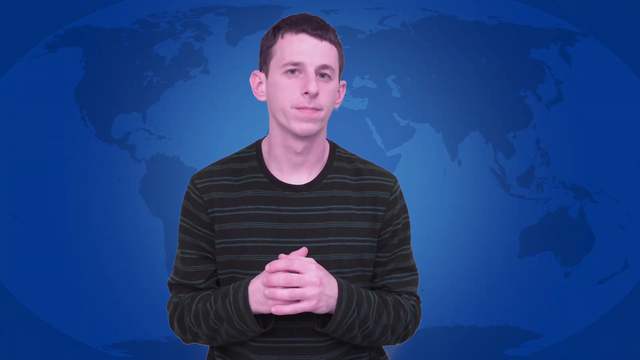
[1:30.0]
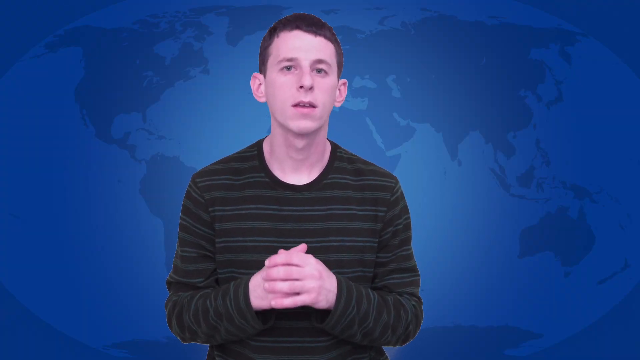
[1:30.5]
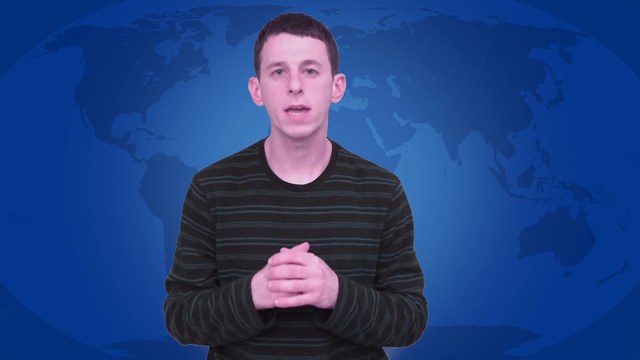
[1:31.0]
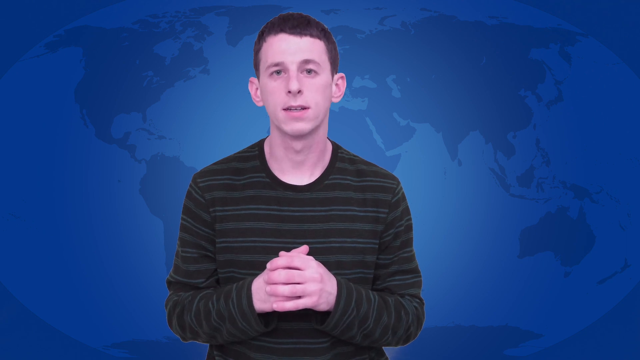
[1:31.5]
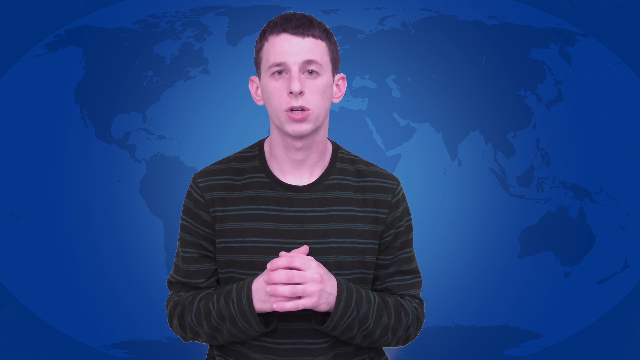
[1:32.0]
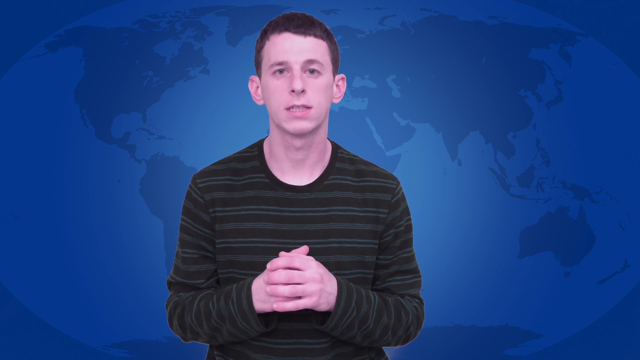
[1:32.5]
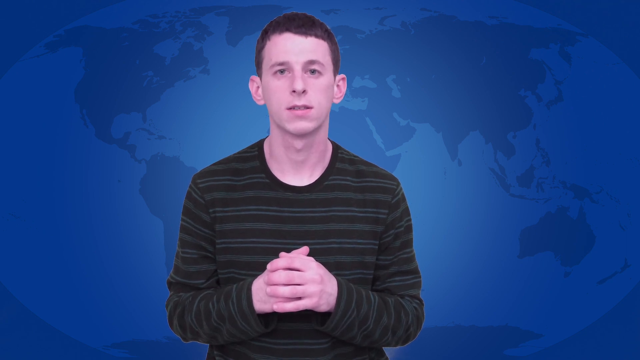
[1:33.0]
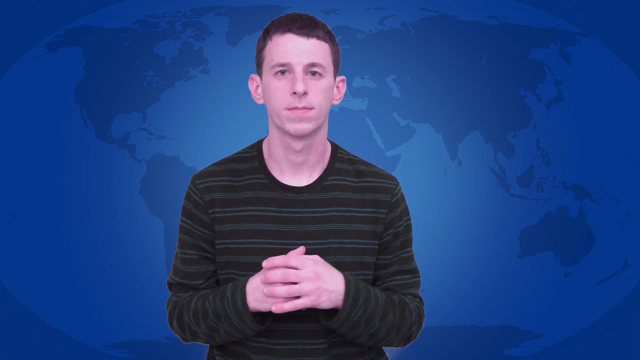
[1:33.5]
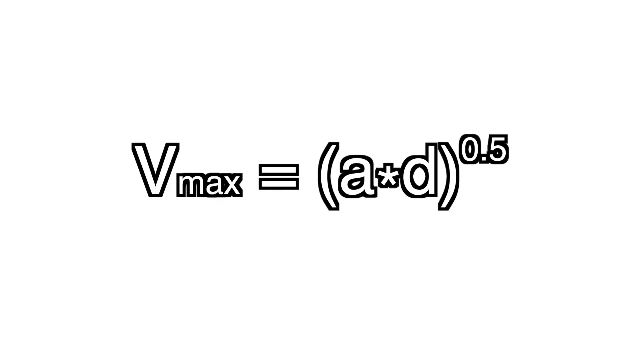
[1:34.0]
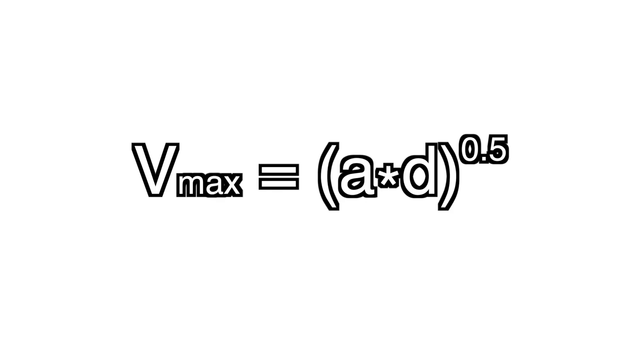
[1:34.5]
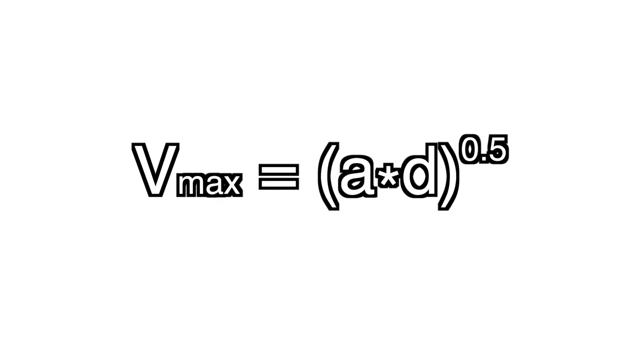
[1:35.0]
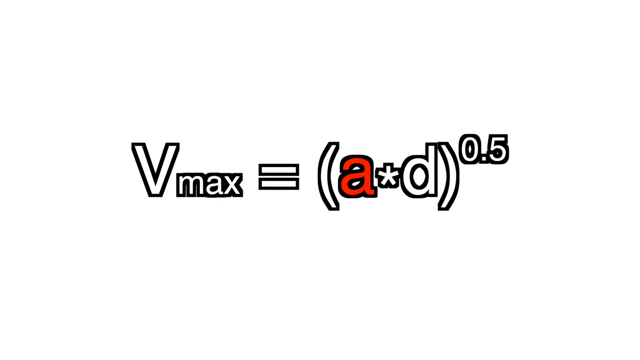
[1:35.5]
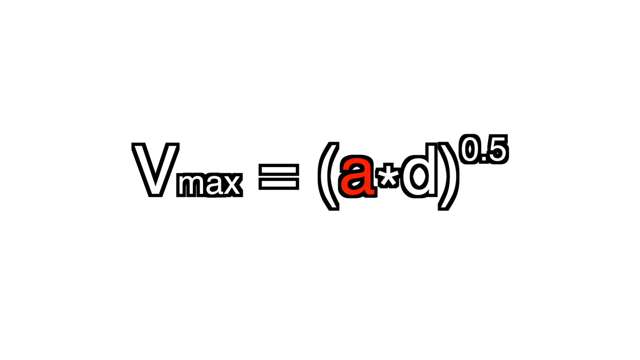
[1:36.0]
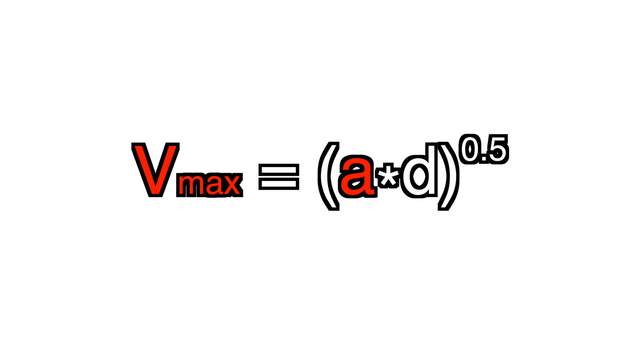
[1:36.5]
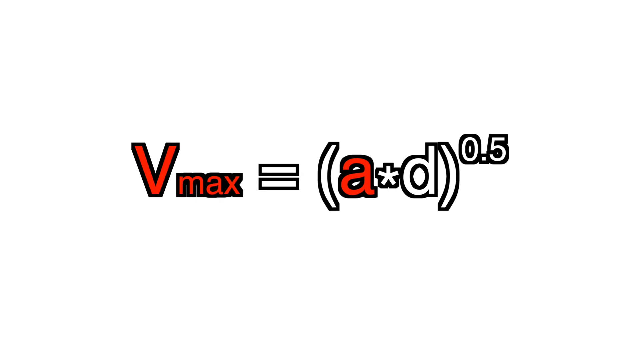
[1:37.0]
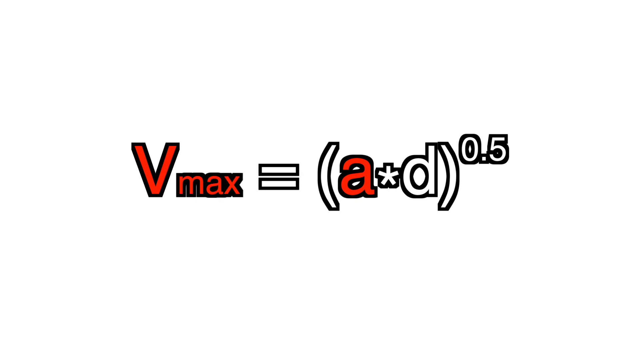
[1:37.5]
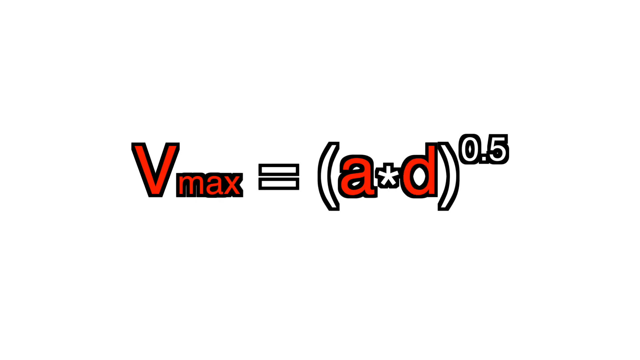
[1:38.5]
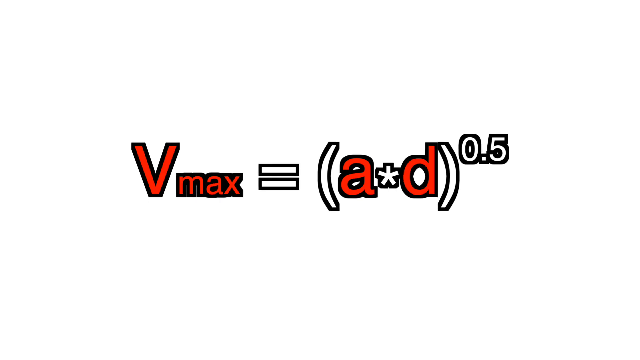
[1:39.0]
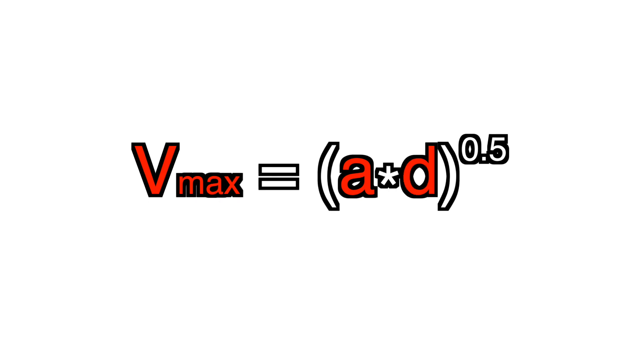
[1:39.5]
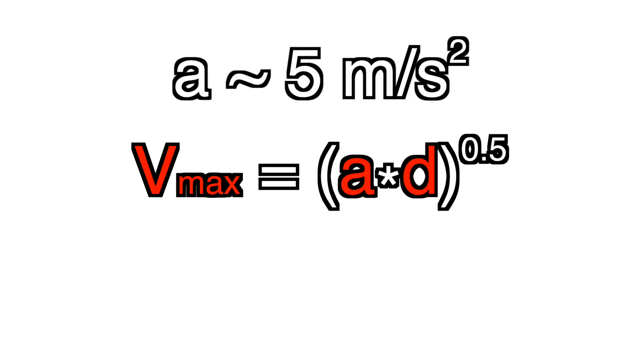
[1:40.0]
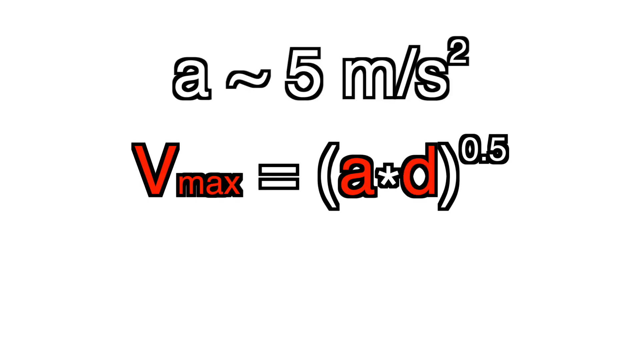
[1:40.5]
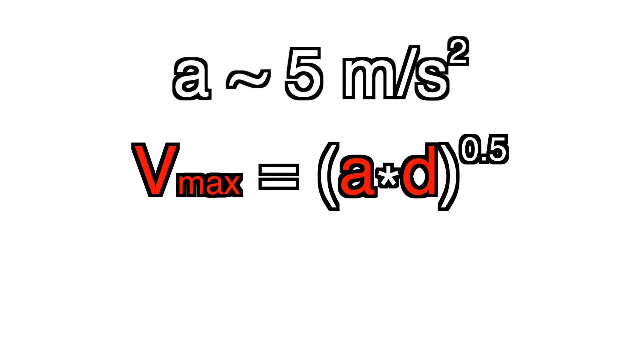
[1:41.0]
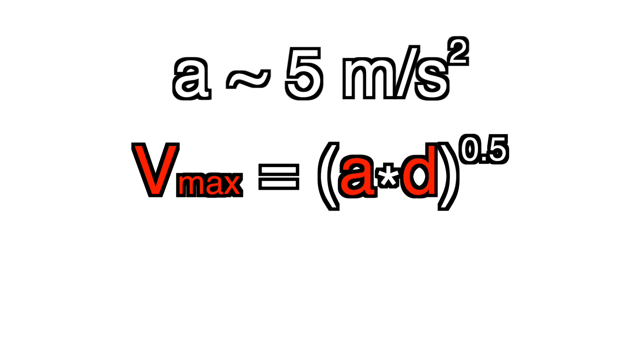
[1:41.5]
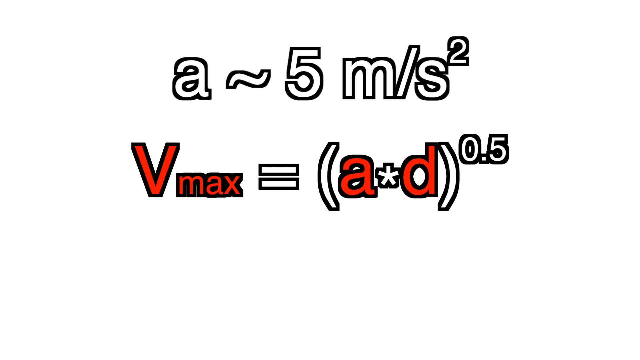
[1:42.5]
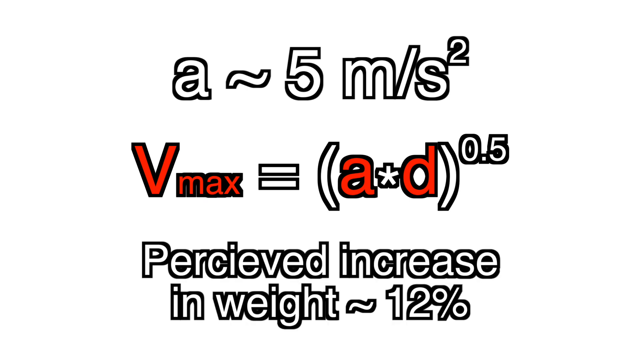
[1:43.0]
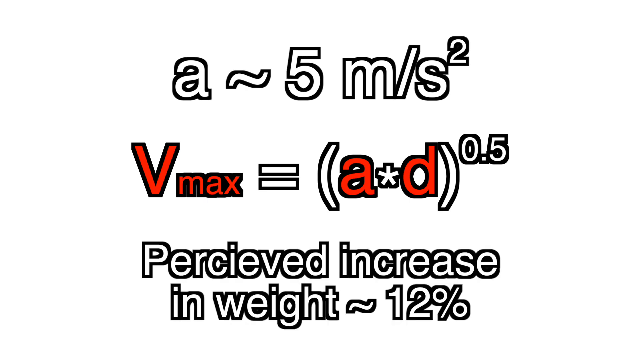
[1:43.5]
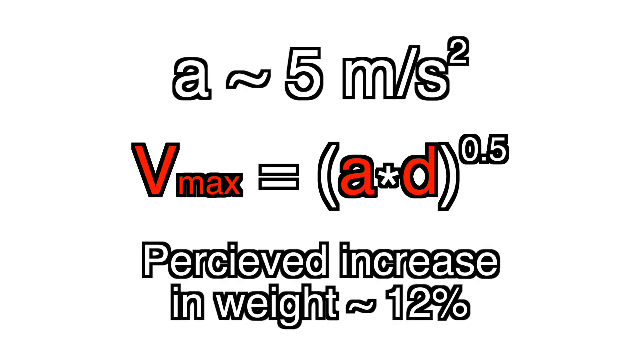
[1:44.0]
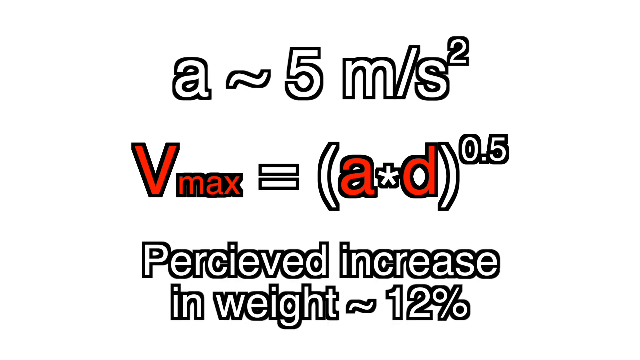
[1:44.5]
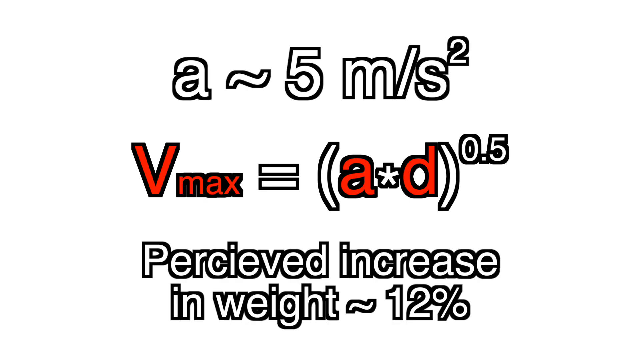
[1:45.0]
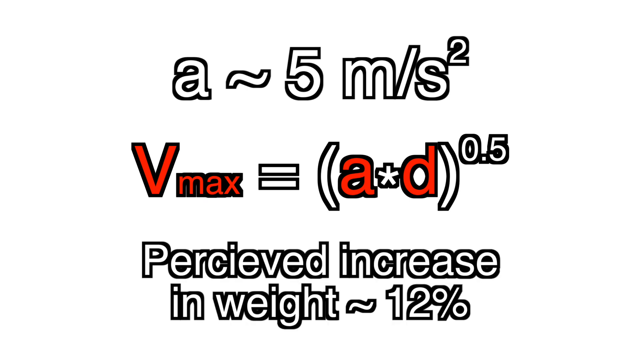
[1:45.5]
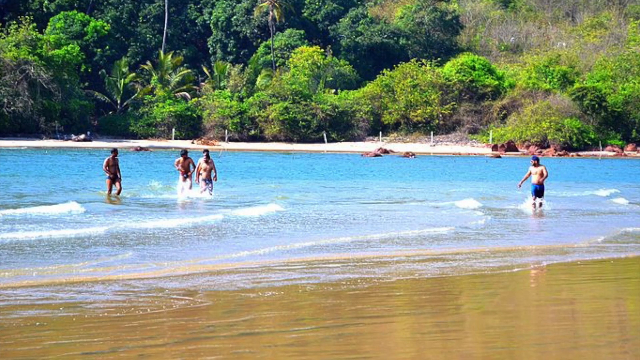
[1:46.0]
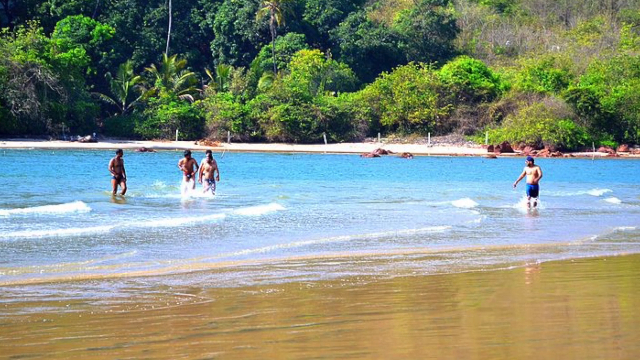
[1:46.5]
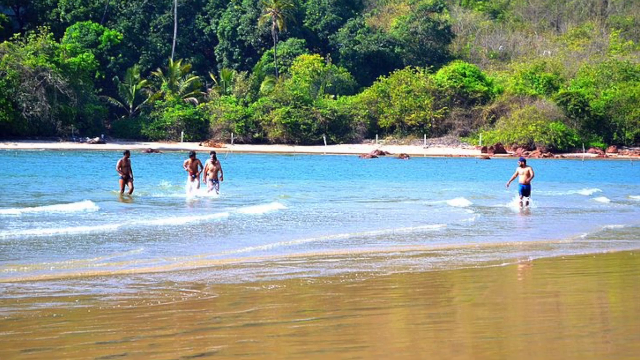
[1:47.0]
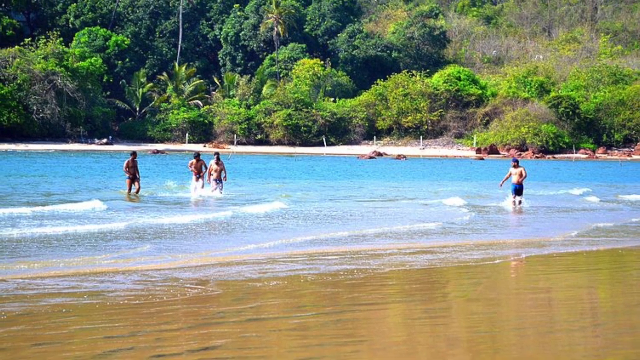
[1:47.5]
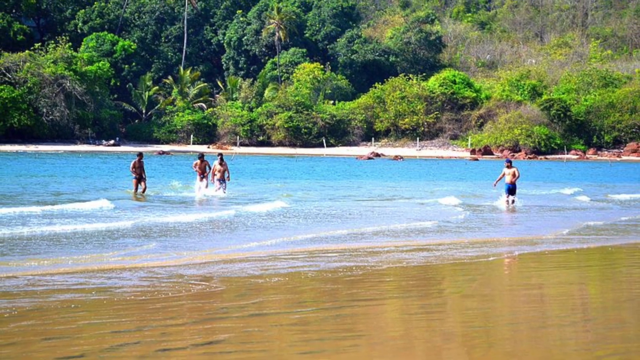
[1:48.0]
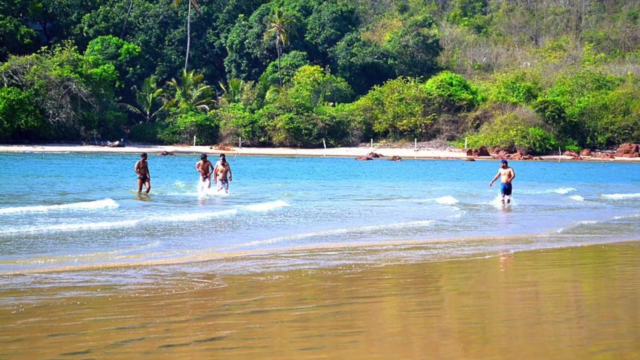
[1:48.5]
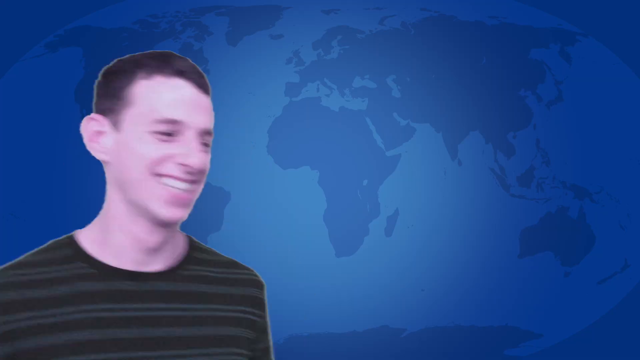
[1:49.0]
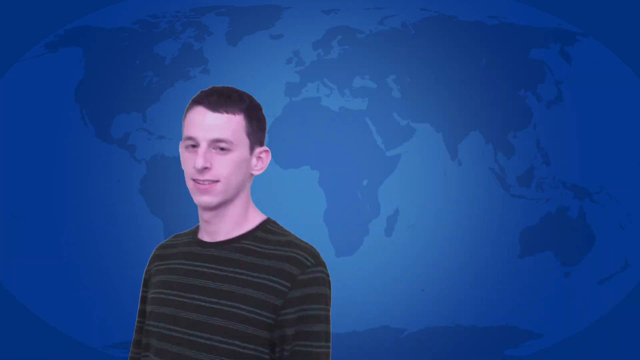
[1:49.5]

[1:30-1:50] The young man talks with his hands still folded together. A formula appears on a white background in white lettering outlined in black: V max equals A times D in parentheses, with 0.5. Next come A, V max, D, and something like A, a squiggly line and 5 m/s squared, along with a perceived increase in weight of about 12%. Suddenly a beach appears, with one man closest to the shallow water and three others out maybe 20 feet further away. Then he goes around in circles really fast.